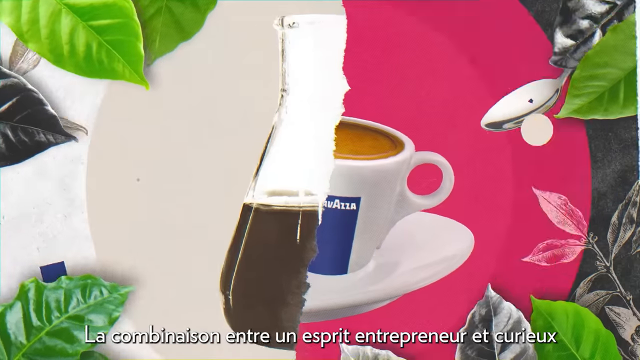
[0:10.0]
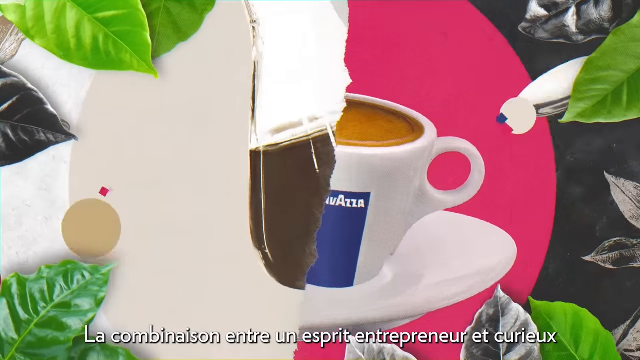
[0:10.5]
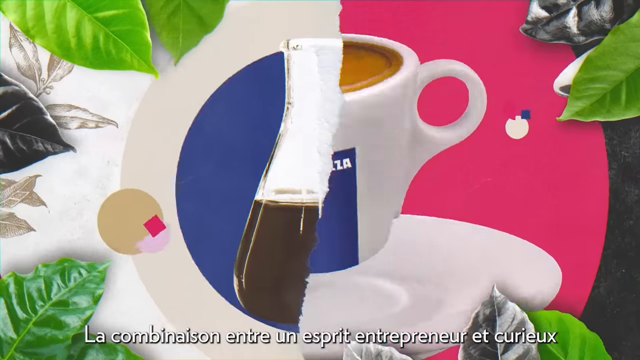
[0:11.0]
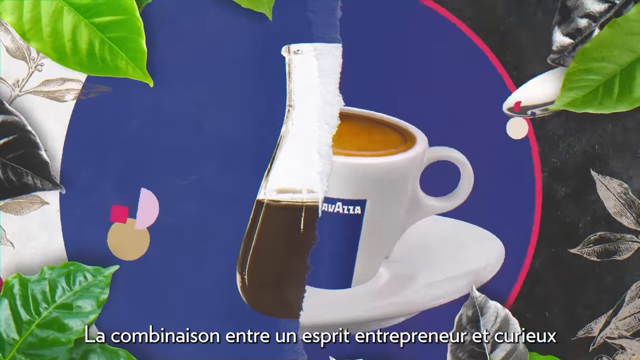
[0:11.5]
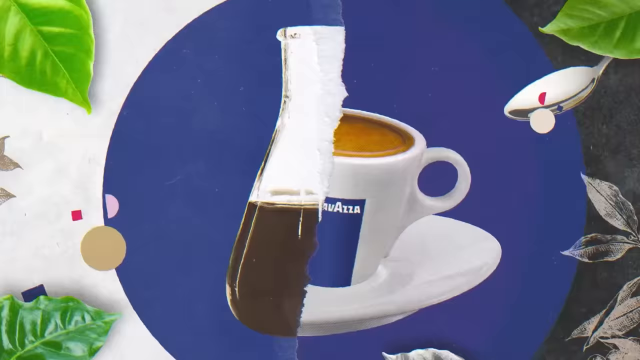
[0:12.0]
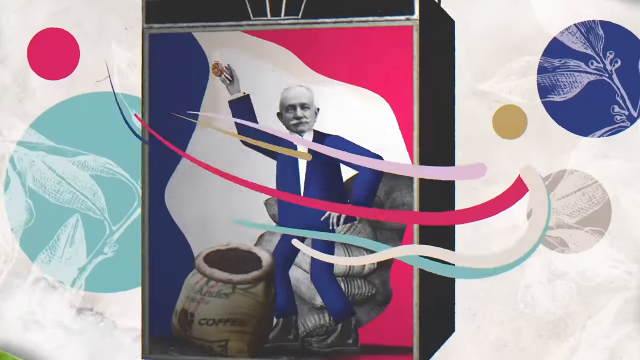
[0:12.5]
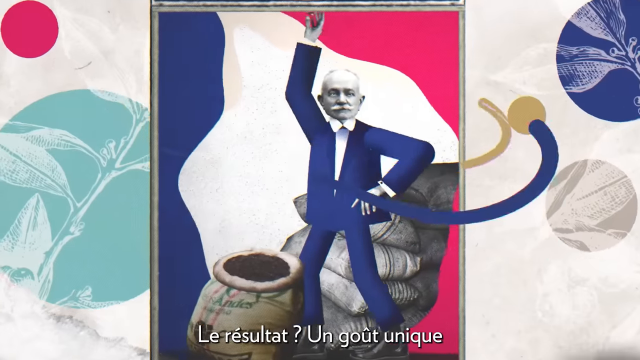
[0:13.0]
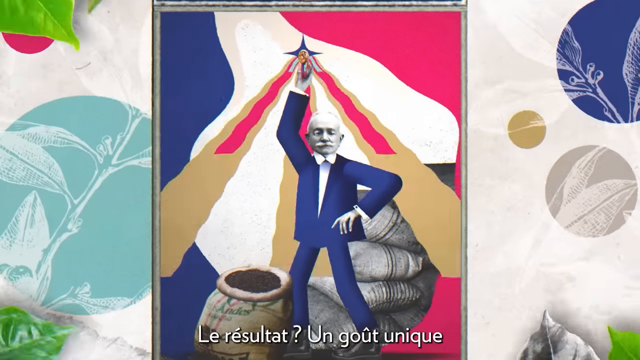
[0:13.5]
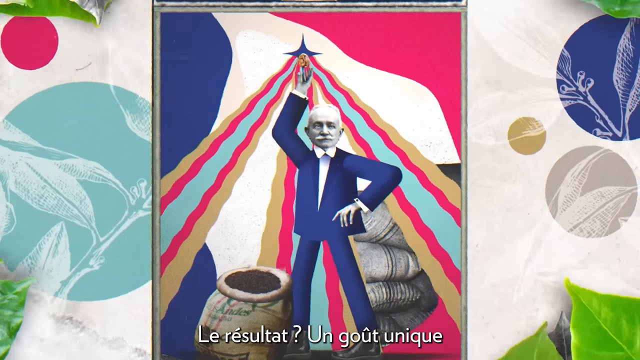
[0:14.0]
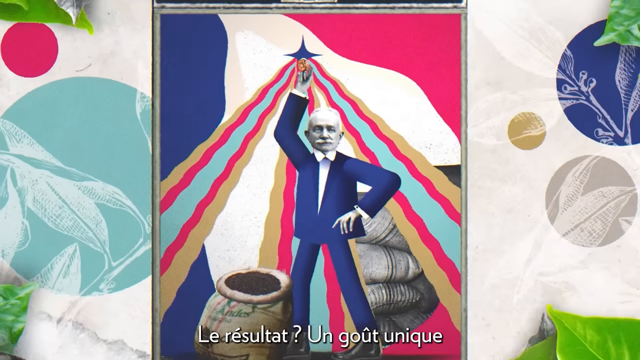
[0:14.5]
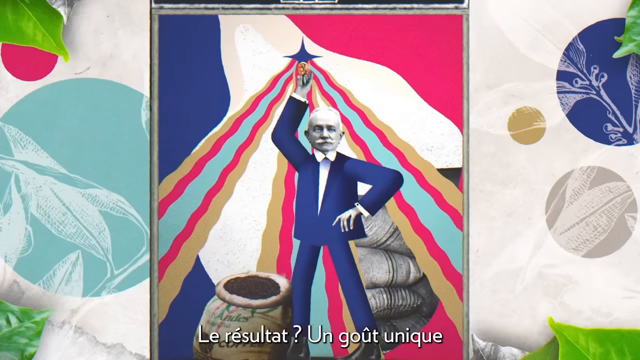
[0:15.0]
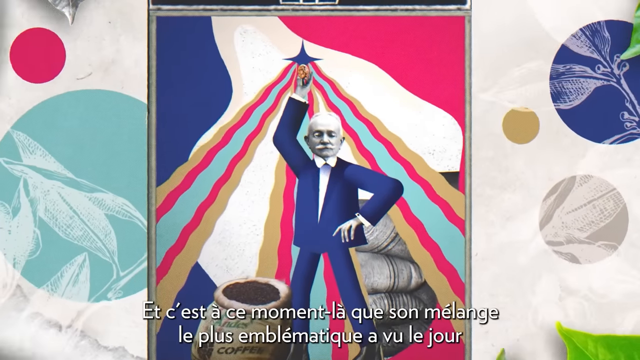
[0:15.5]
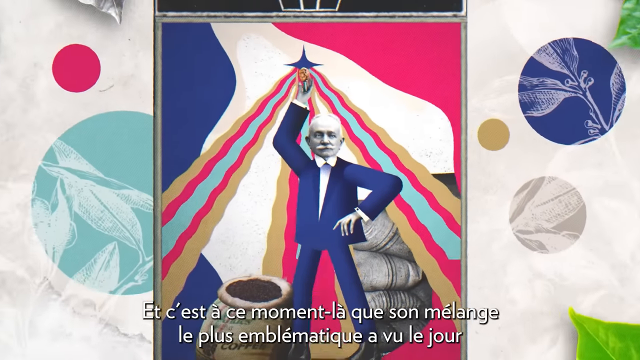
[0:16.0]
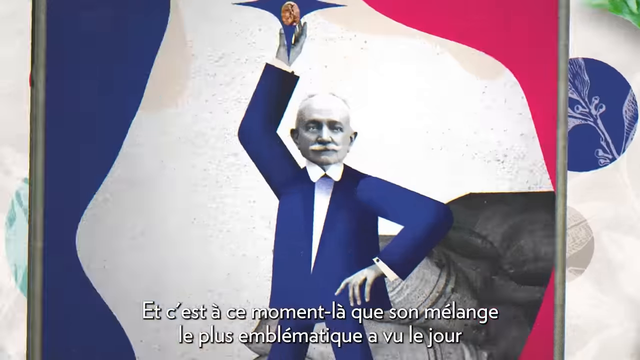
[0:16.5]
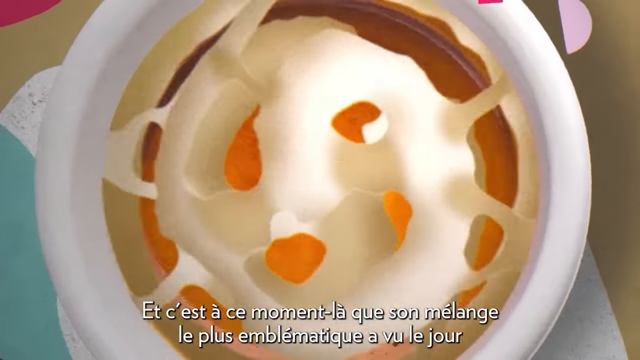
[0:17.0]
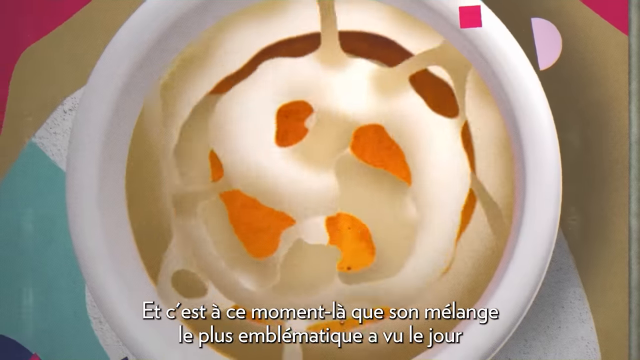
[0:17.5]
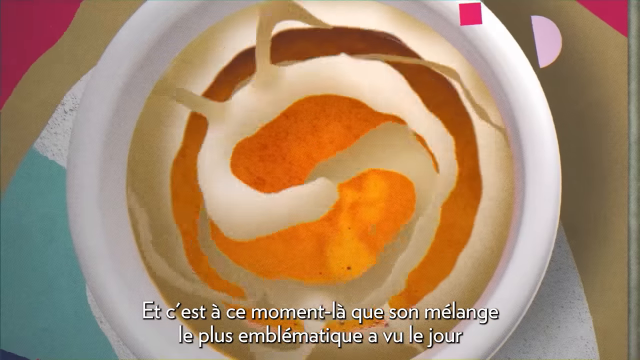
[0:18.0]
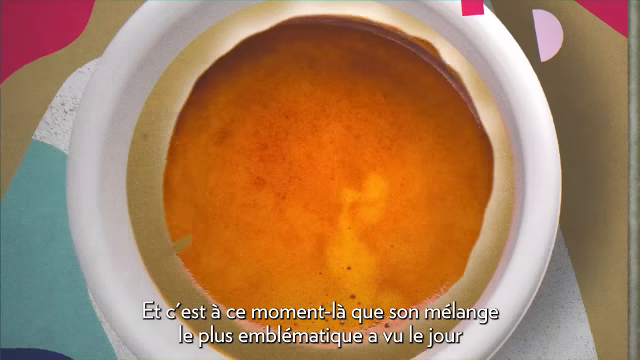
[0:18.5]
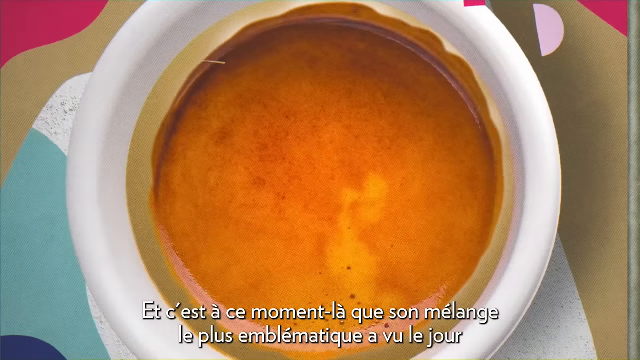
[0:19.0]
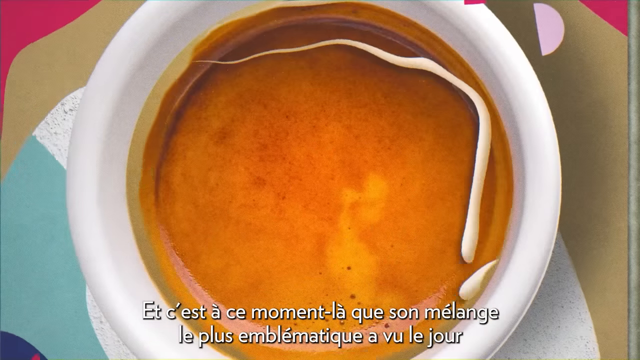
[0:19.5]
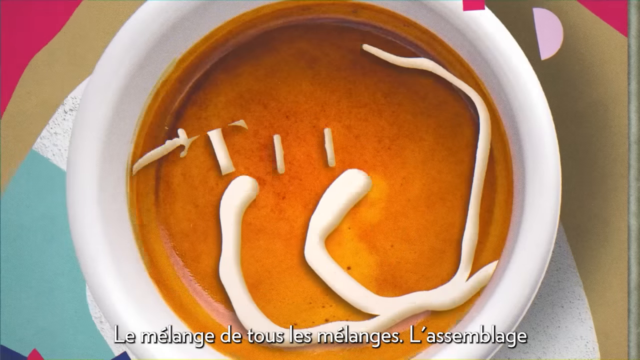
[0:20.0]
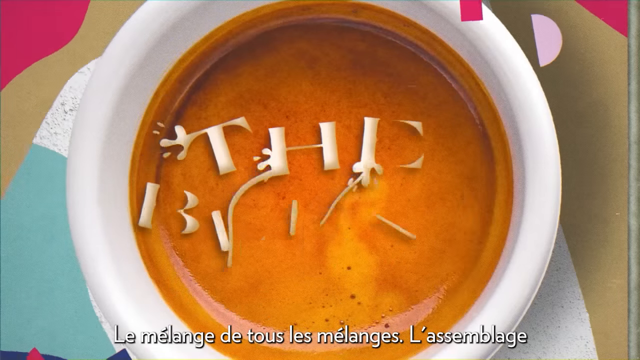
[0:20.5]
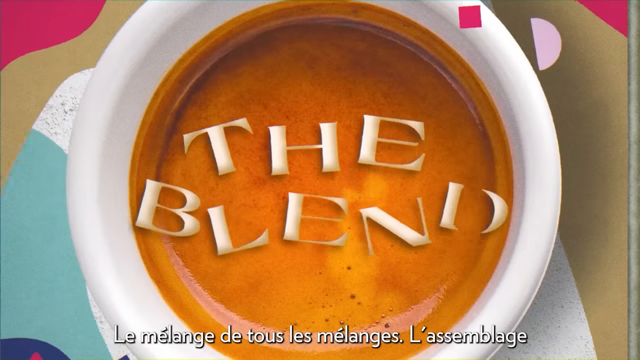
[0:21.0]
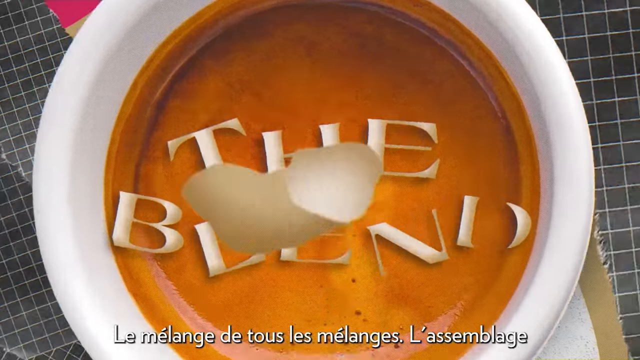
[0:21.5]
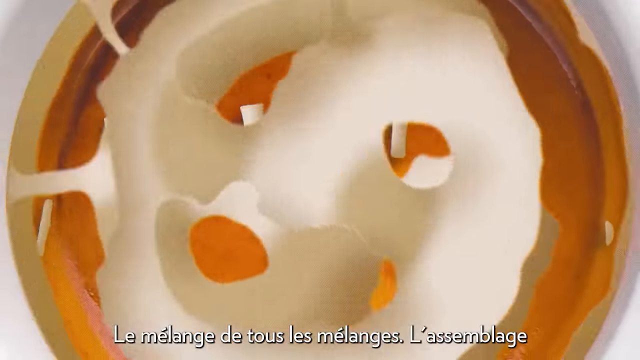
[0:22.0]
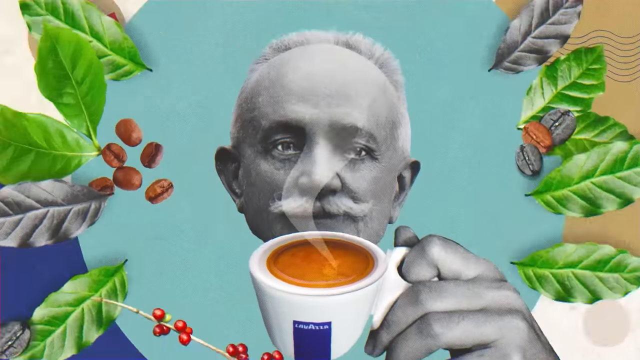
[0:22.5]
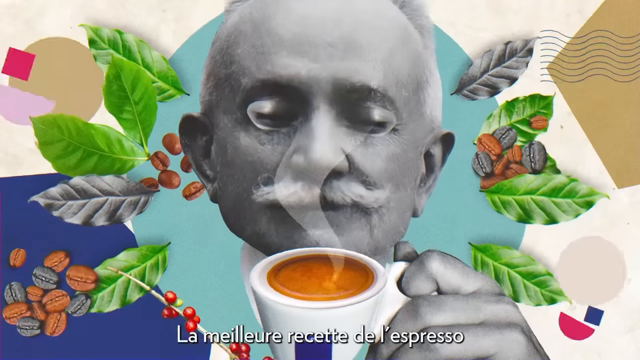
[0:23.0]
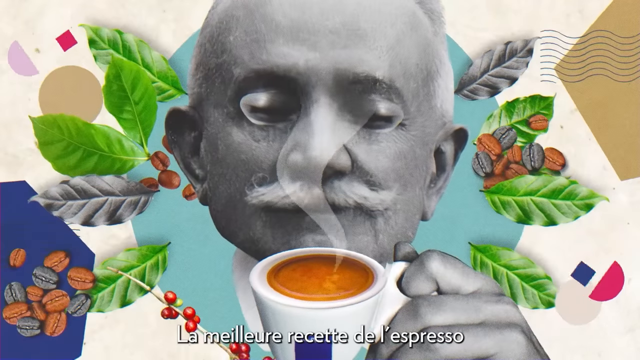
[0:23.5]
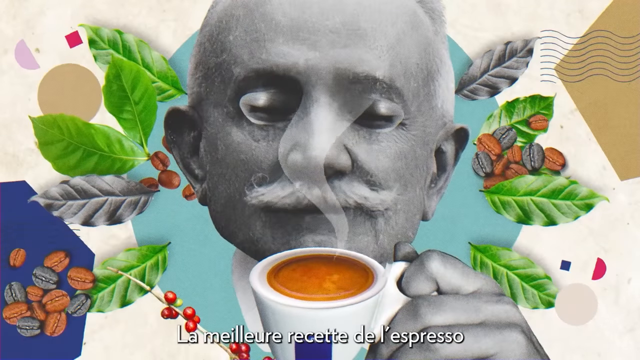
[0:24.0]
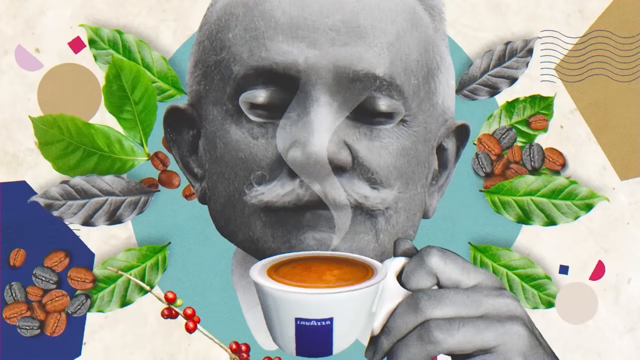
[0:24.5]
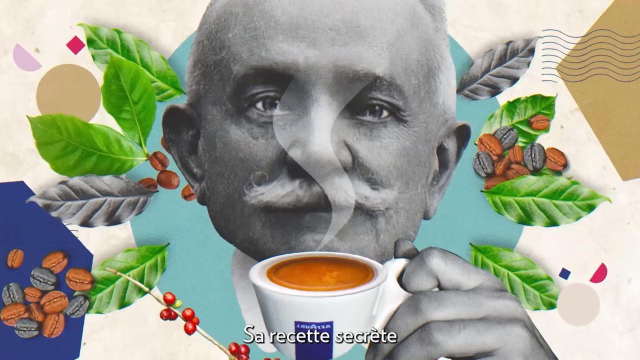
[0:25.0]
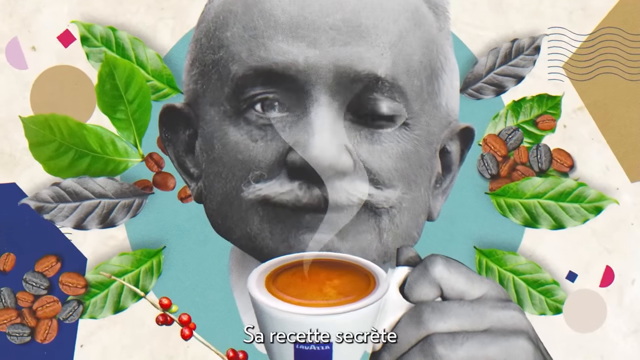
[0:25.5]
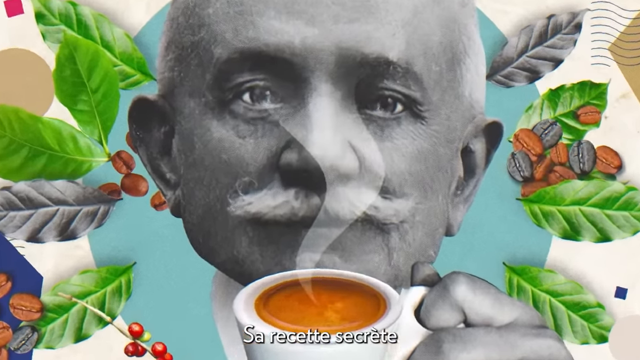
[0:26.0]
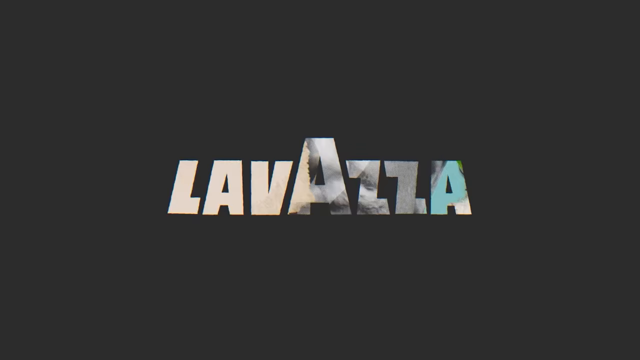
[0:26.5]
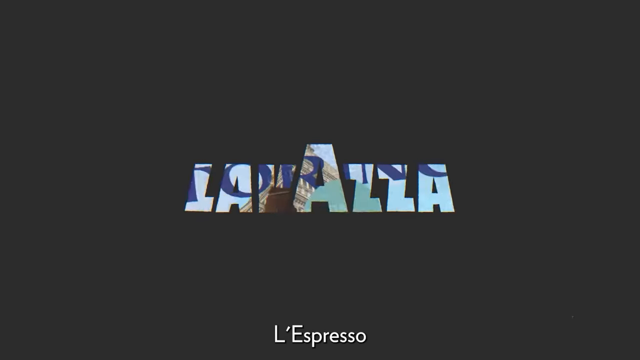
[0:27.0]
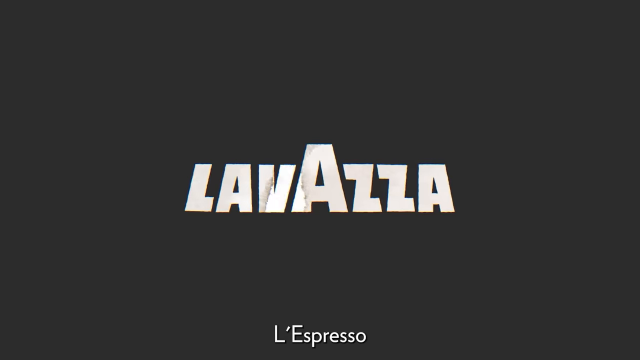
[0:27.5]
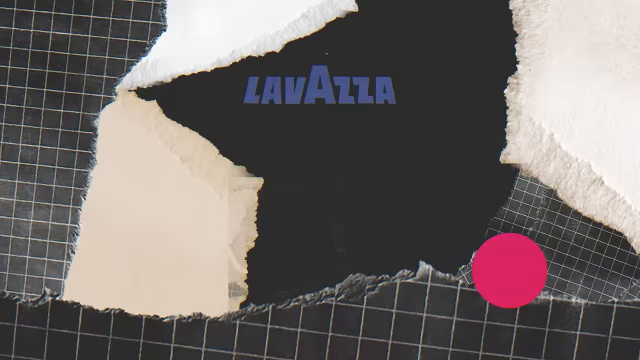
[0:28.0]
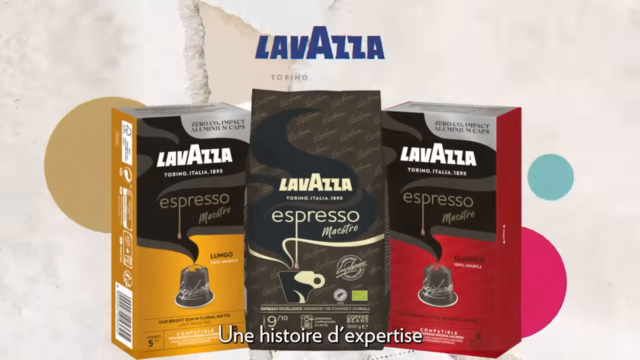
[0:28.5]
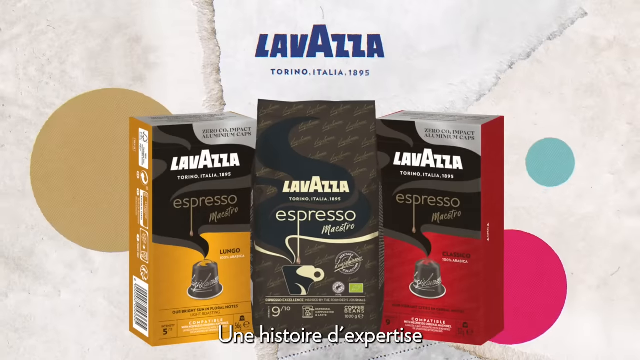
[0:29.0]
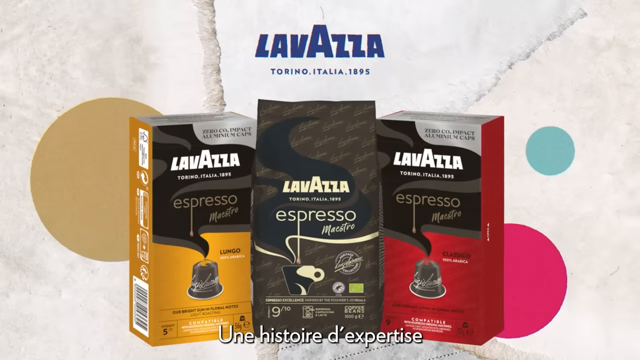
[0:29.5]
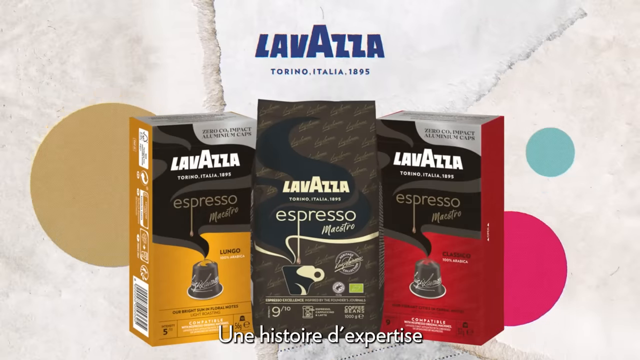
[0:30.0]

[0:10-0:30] In a style that looks like a collage, various images edited together are cut through rapidly to create a unique animation. A coffee cup shows the word "LAV AZA" on a blue background on its side, with a brown liquid inside. A torn paper effect across the middle reveals a beaker filled with a black liquid. It then cuts to an animated graphic of a mustached man with a black and white photograph, wearing a blue cartoon suit, who seems to be waving and holding a blue star with blue, red, and gold beams coming out of it. On either side are images related to coffee plants. White French subtitles run along the bottom throughout the entire video. It cuts to a coffee cup filled with liquid, then to the man holding the coffee cup, seemingly sniffing the cup and its contents. Finally, it ends with various packaging from the LAV AZA brand showing espresso and its flavors.